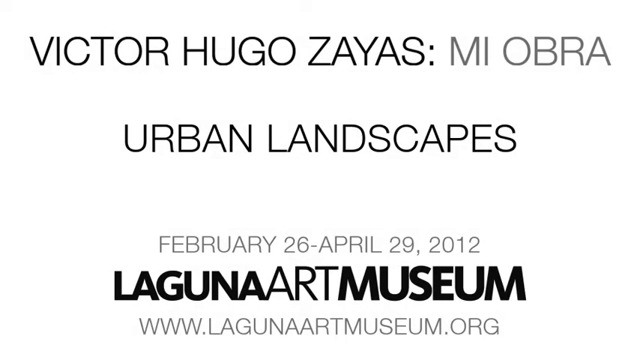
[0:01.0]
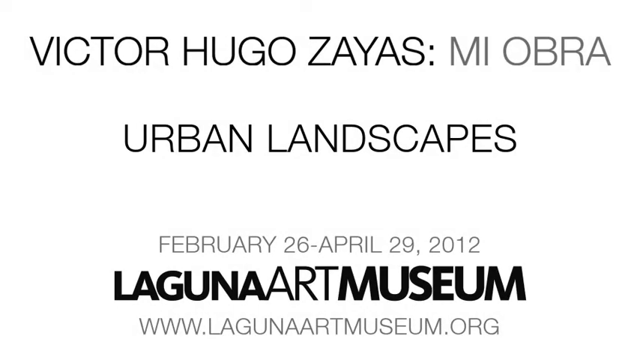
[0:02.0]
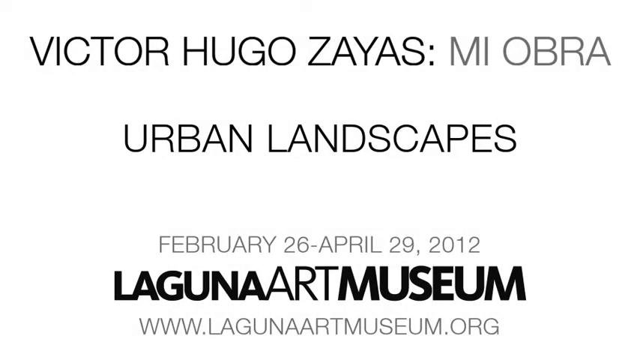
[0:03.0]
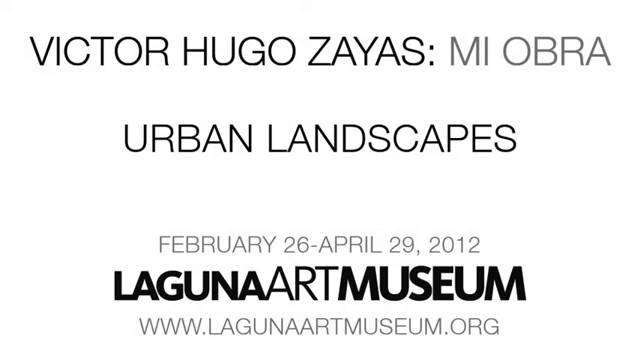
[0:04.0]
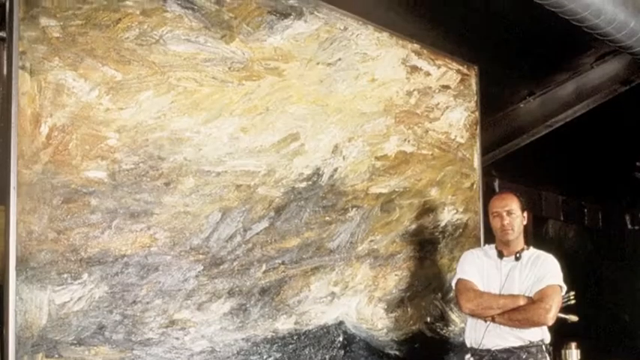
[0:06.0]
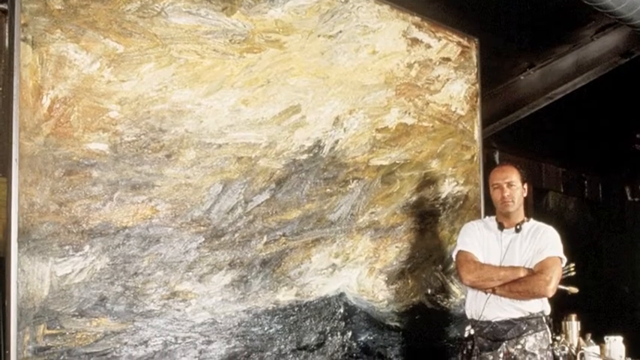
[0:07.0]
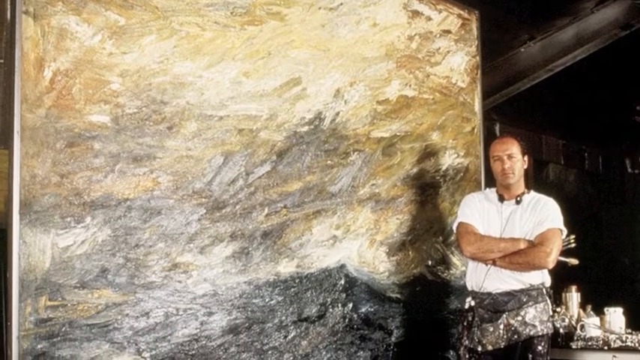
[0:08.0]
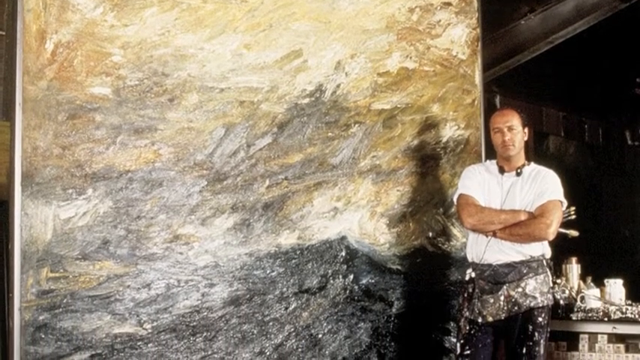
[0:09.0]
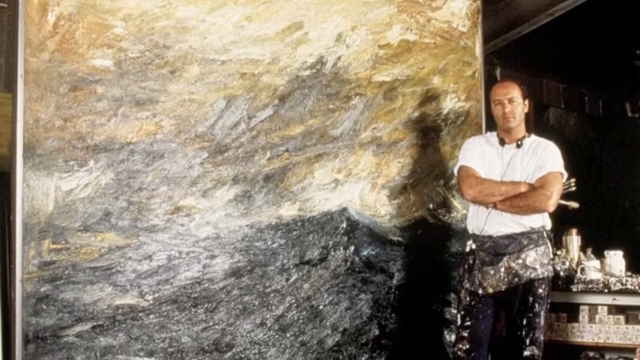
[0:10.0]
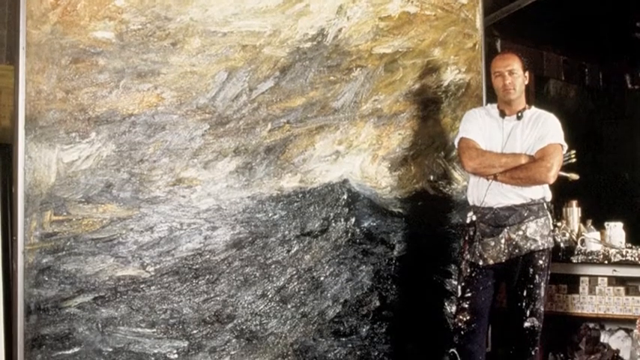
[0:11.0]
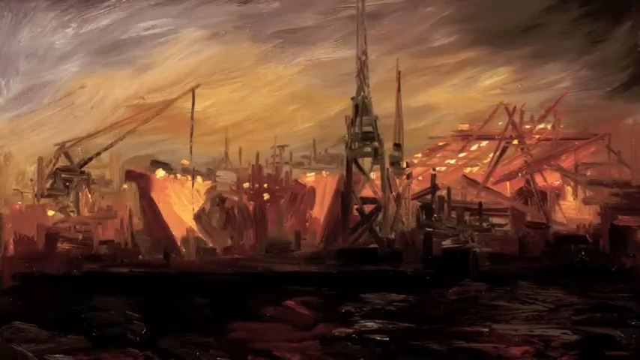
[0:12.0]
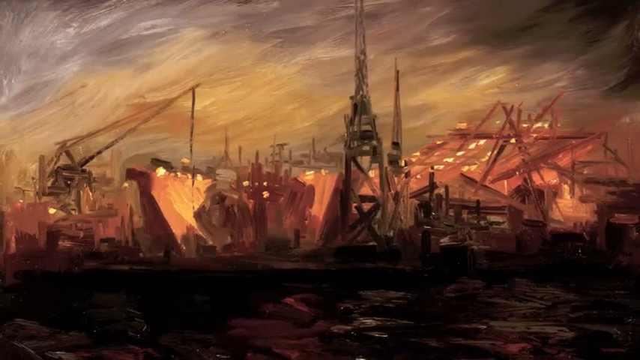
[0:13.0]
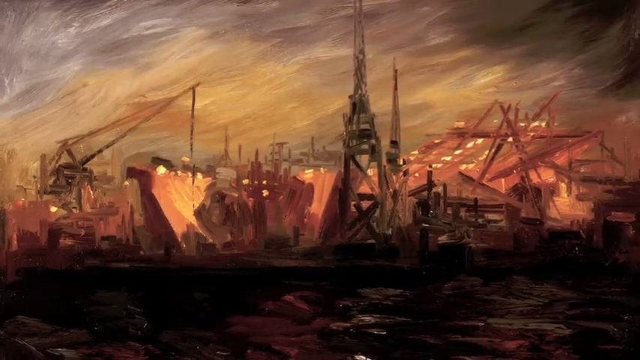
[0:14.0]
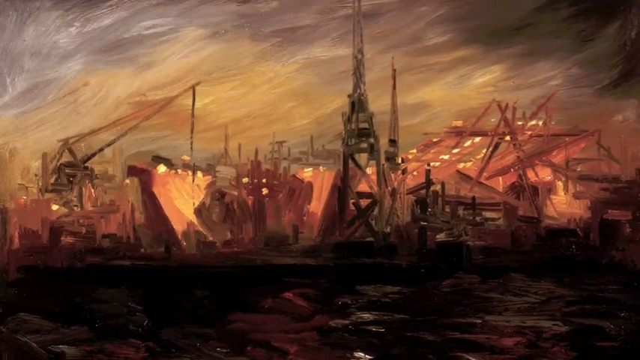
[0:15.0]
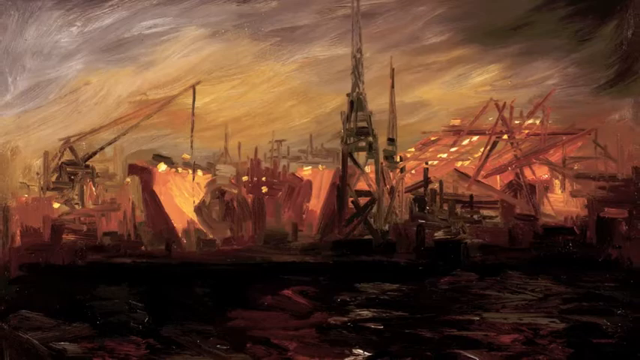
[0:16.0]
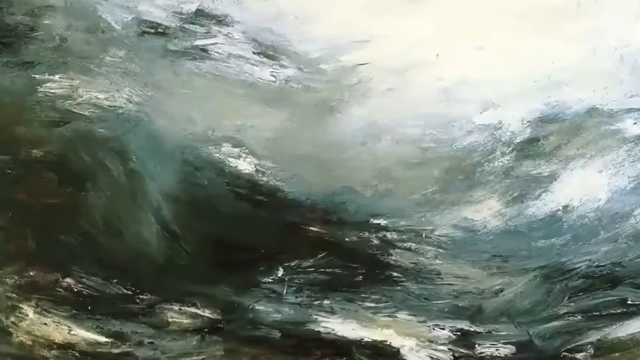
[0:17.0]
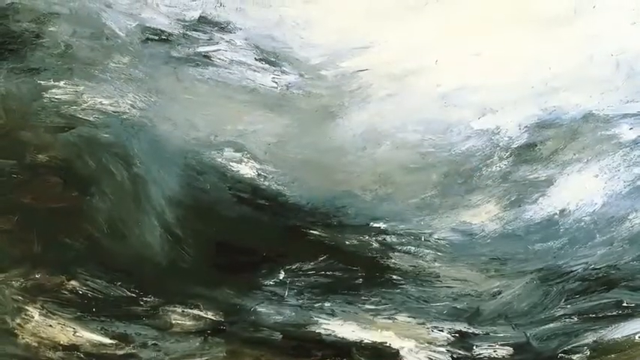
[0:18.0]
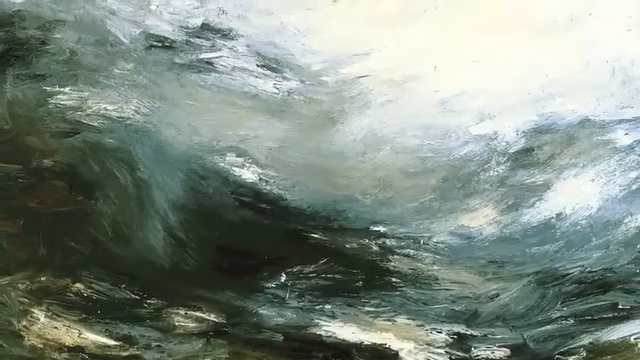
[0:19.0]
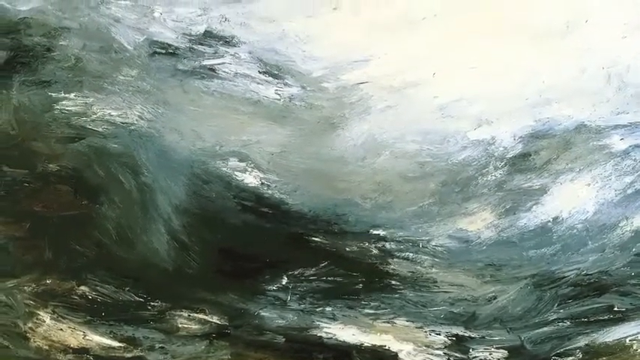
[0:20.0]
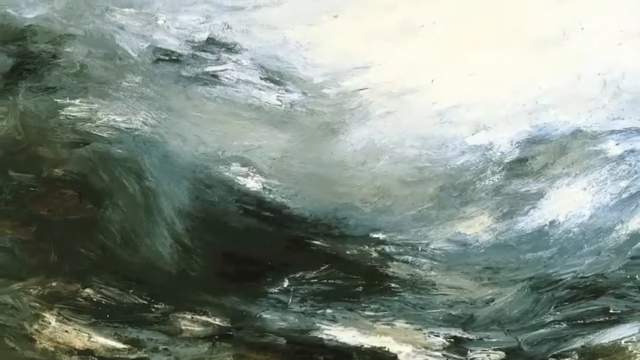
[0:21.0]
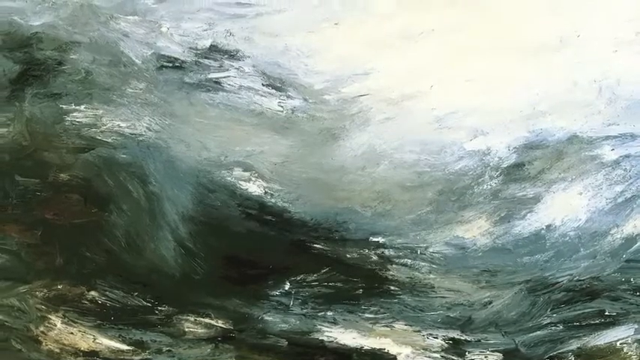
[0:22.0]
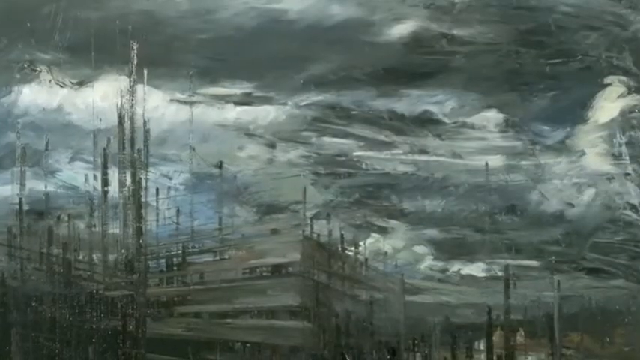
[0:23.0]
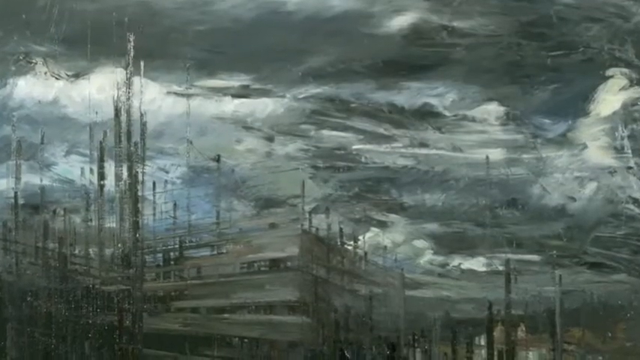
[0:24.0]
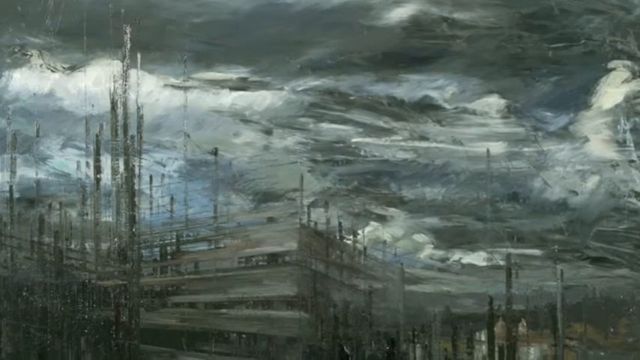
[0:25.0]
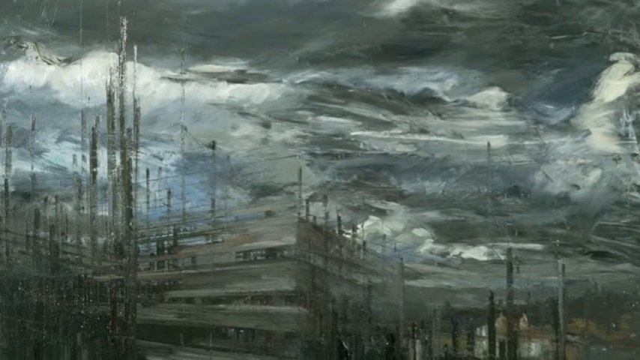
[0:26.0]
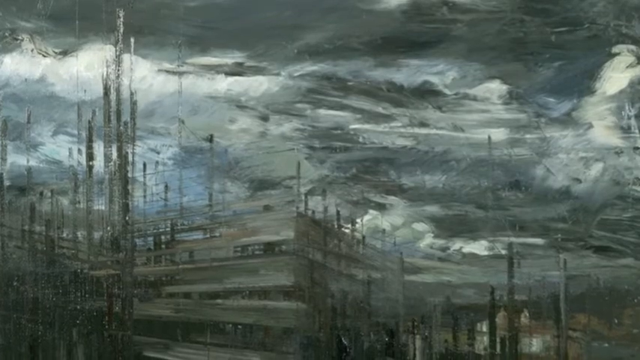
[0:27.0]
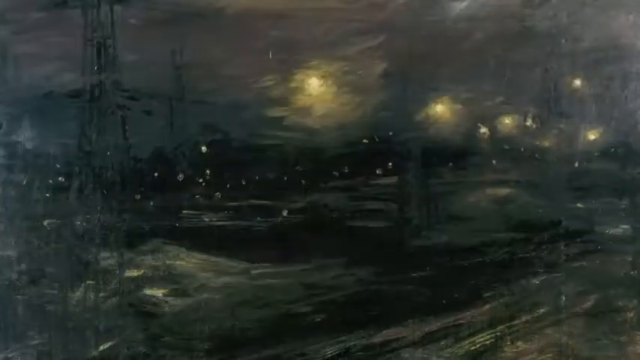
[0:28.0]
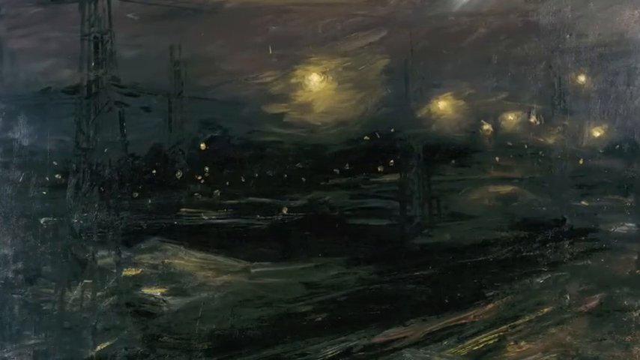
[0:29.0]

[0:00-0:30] A man appears next to what seems to be a painting, and different paintings are then shown one after another. All of them are dark, with blackish tones; none is colorful, and they seem to have no light in them. A name reads "Victor Hugo Zayas", though it is unclear whether this is the man. The only painting with a bit of color is the one the man was standing next to. Another looks like the sea, an angry sea with big waves everywhere. What the other paintings depict is unclear.